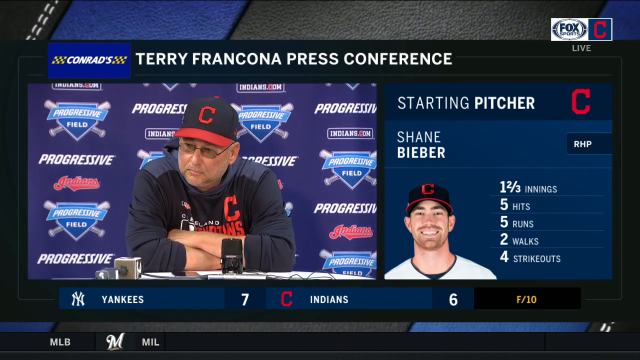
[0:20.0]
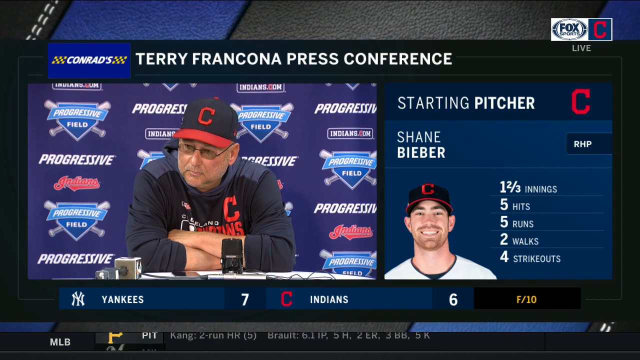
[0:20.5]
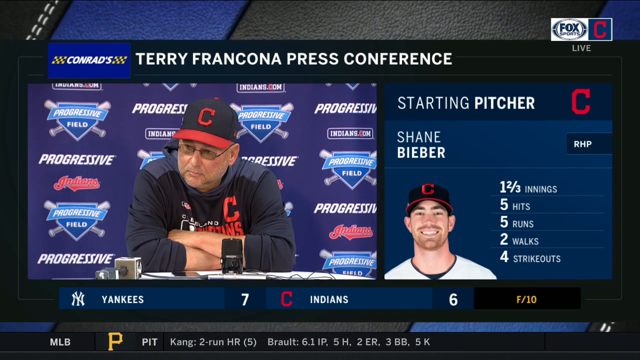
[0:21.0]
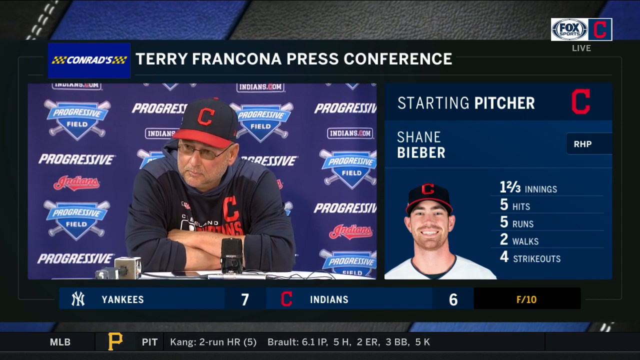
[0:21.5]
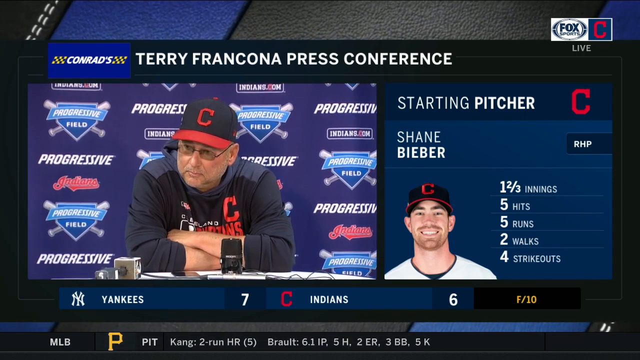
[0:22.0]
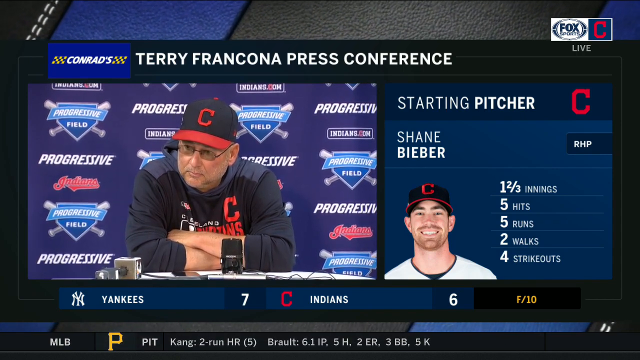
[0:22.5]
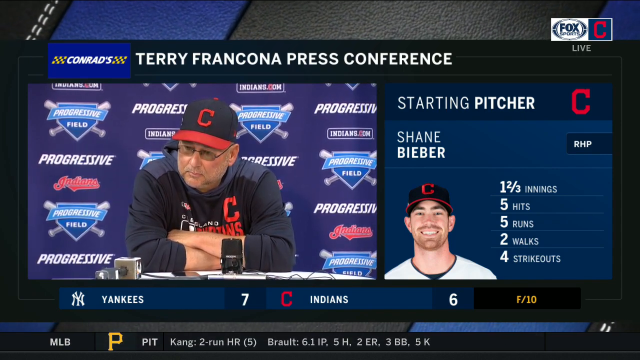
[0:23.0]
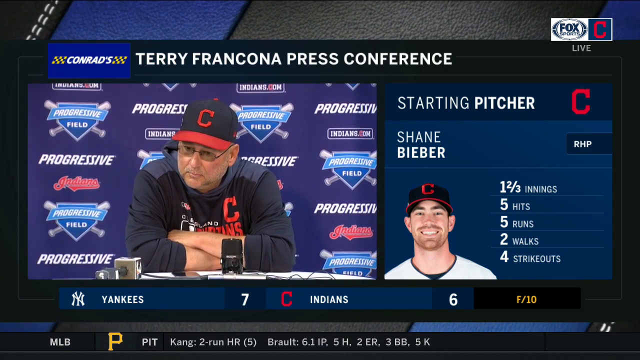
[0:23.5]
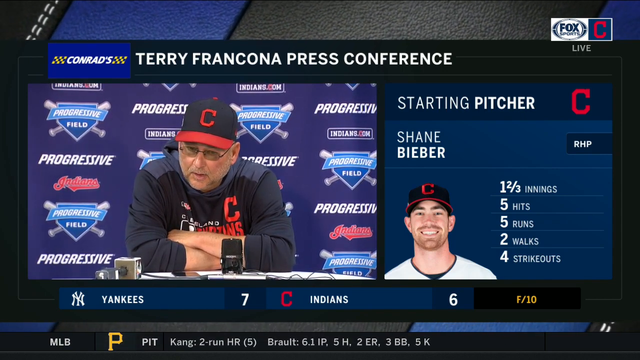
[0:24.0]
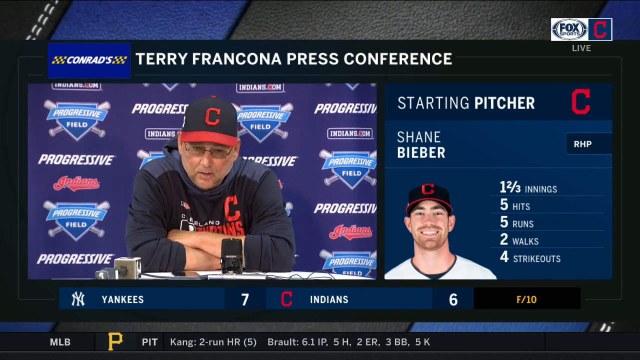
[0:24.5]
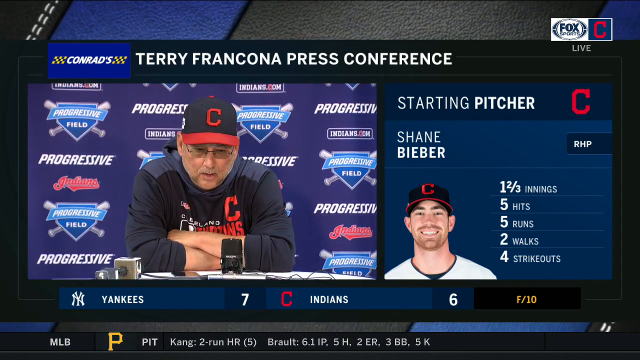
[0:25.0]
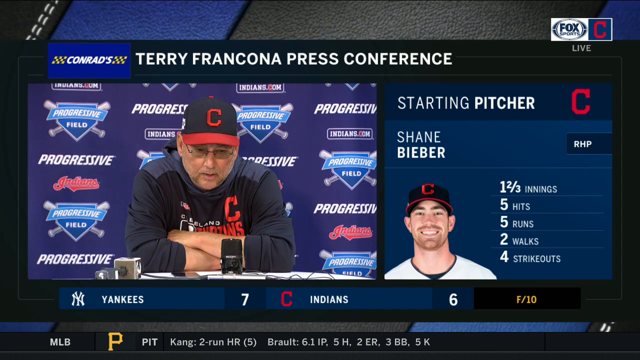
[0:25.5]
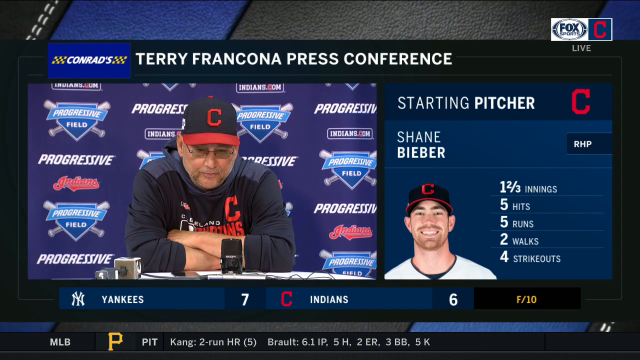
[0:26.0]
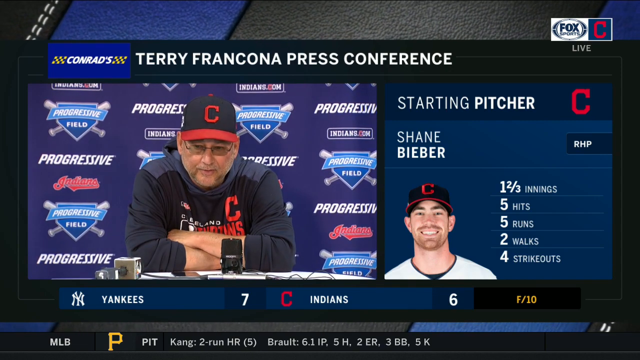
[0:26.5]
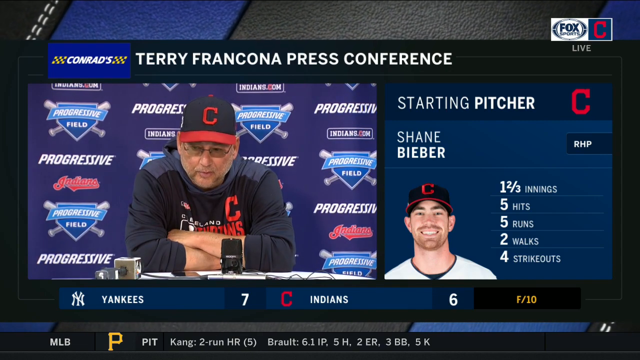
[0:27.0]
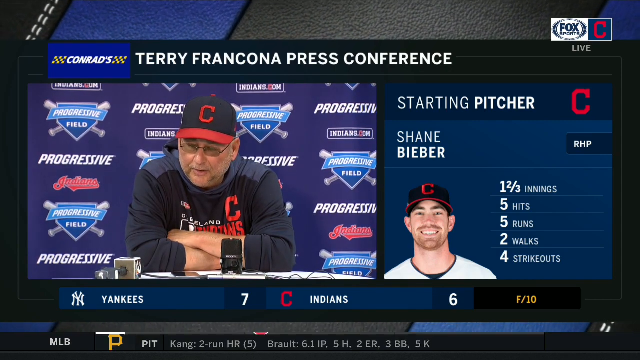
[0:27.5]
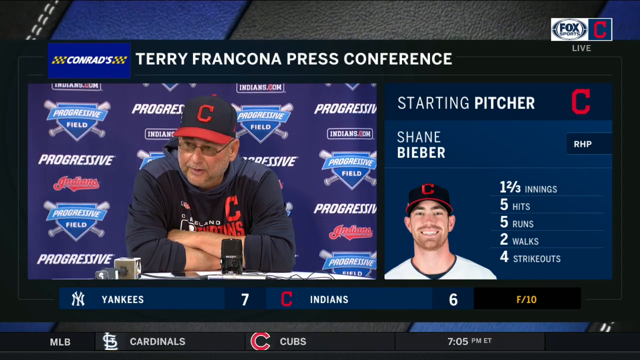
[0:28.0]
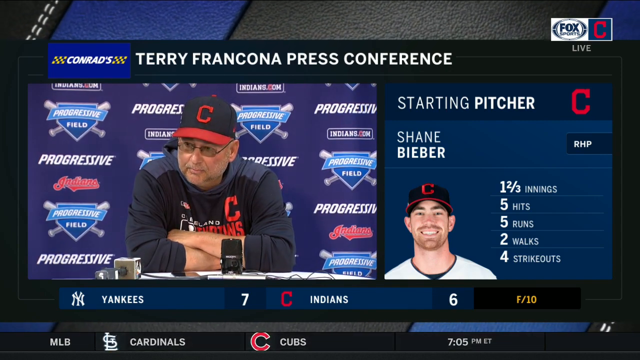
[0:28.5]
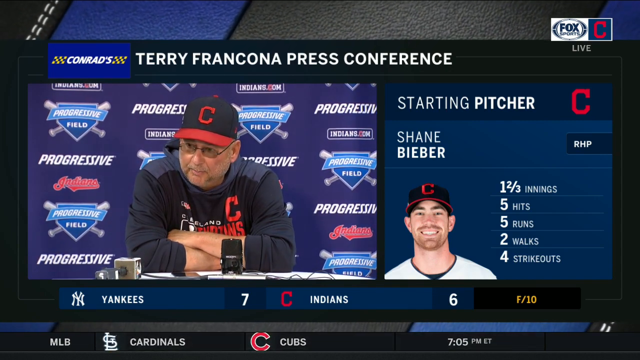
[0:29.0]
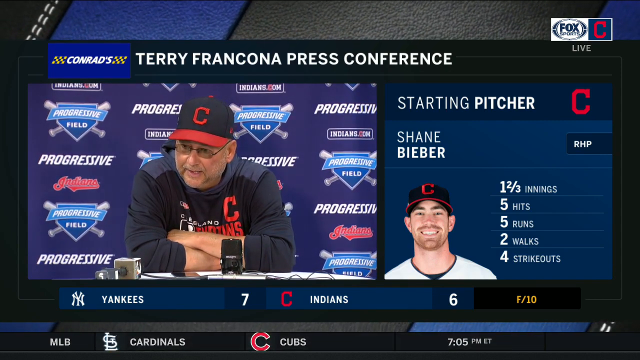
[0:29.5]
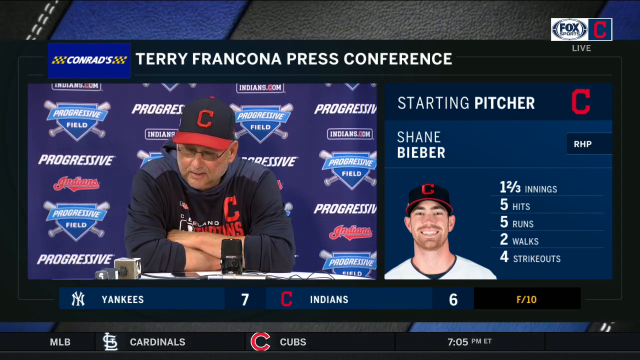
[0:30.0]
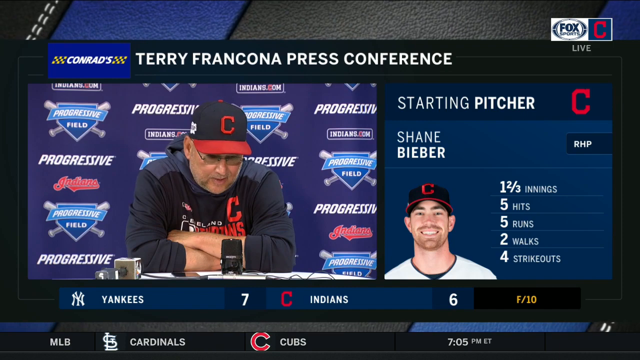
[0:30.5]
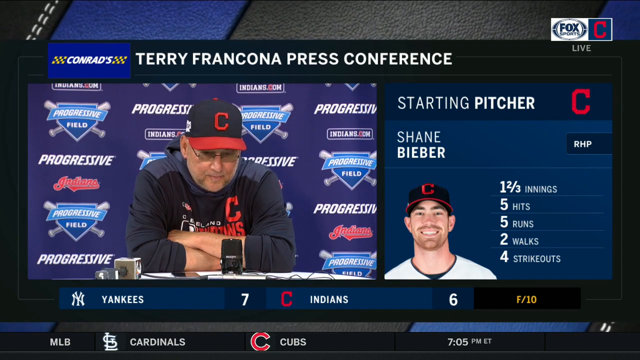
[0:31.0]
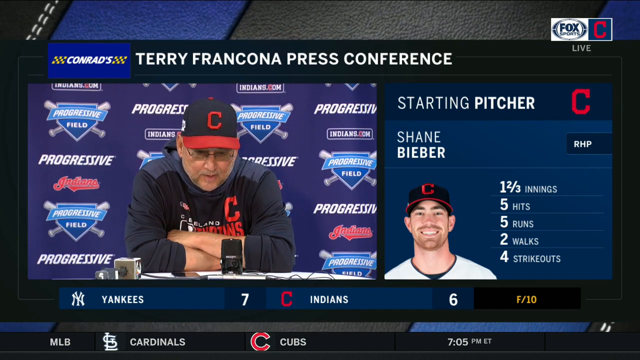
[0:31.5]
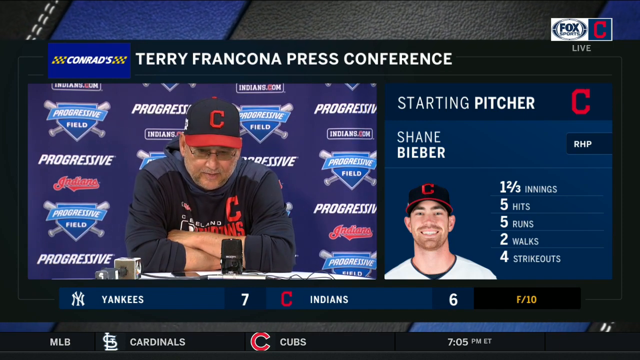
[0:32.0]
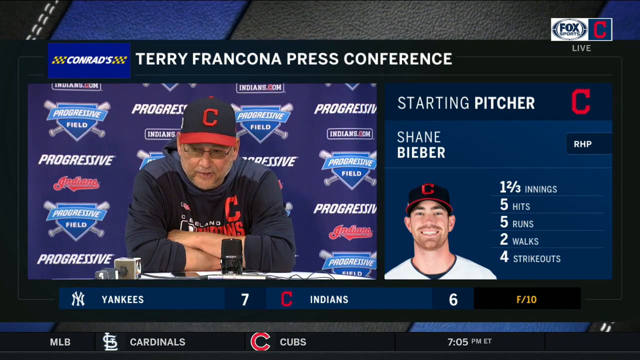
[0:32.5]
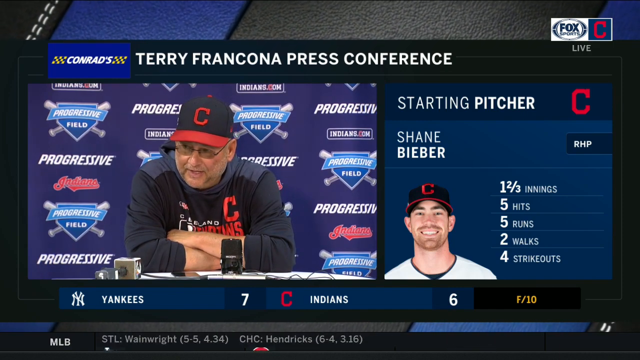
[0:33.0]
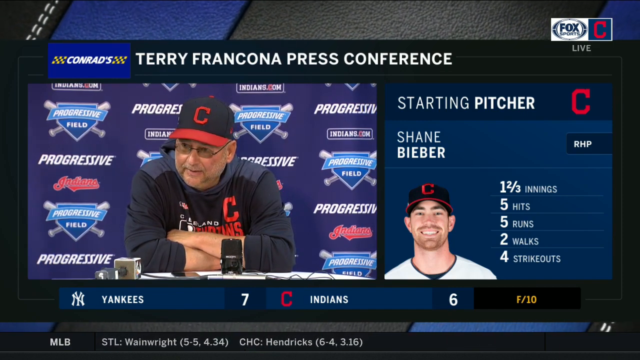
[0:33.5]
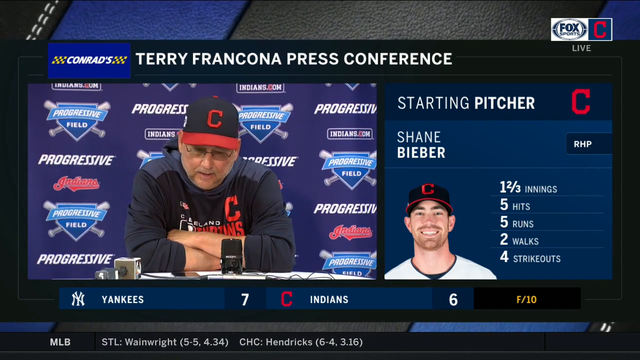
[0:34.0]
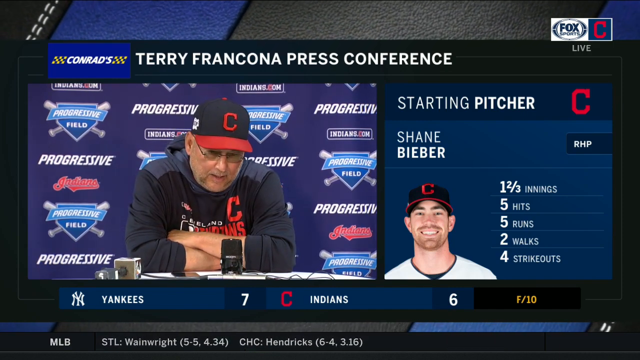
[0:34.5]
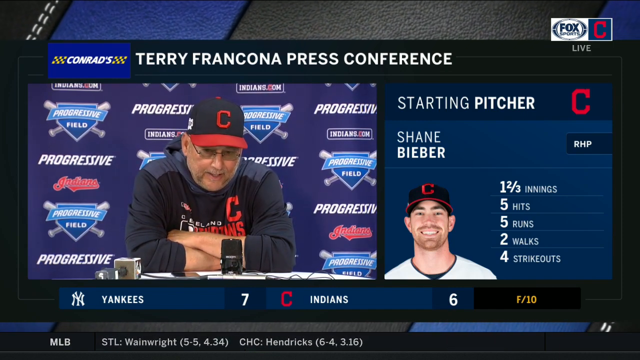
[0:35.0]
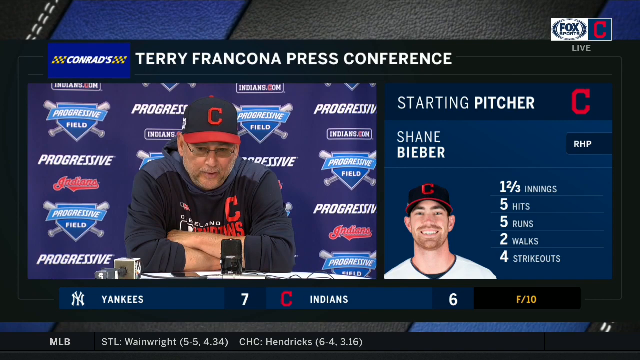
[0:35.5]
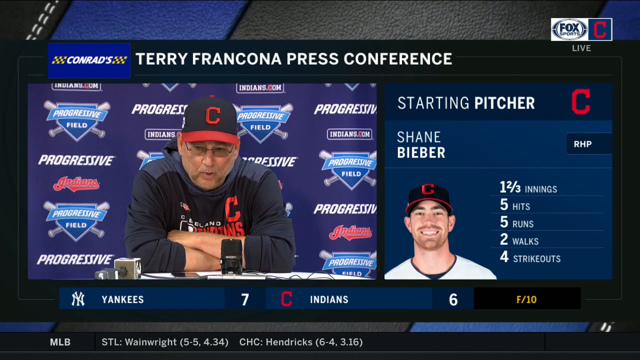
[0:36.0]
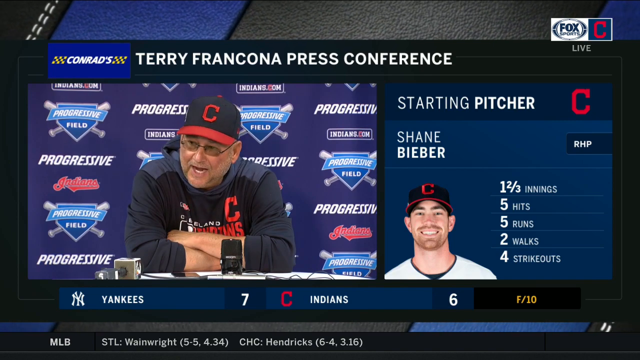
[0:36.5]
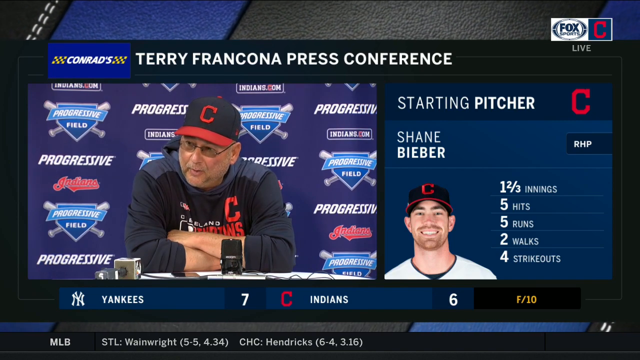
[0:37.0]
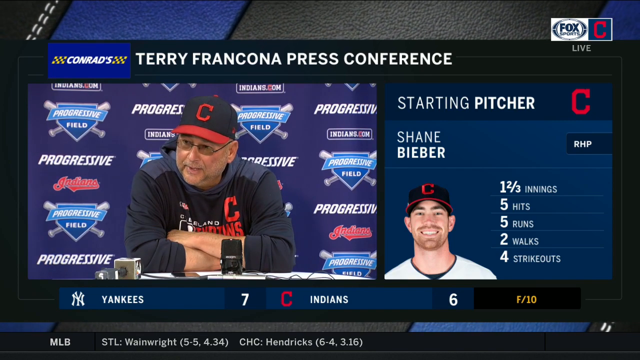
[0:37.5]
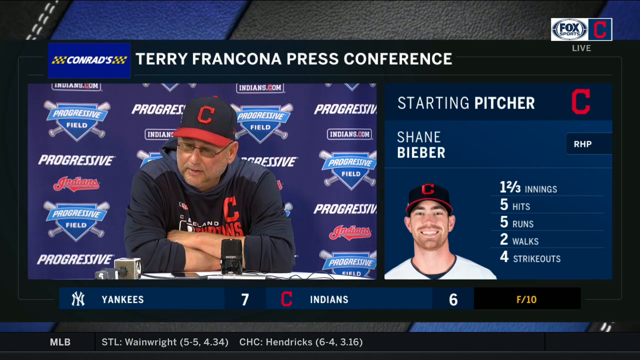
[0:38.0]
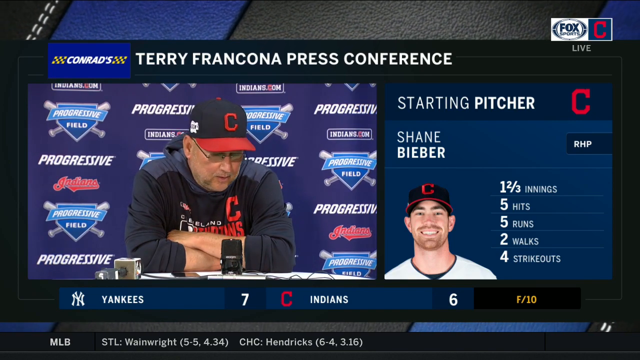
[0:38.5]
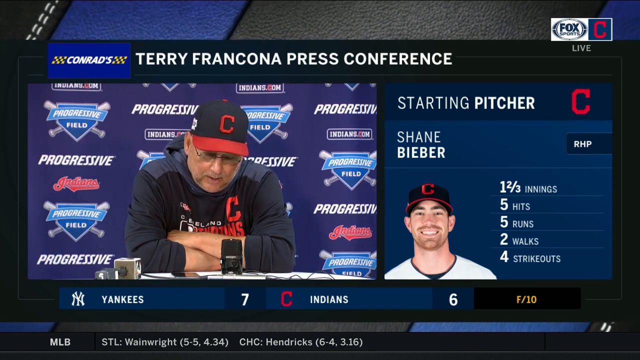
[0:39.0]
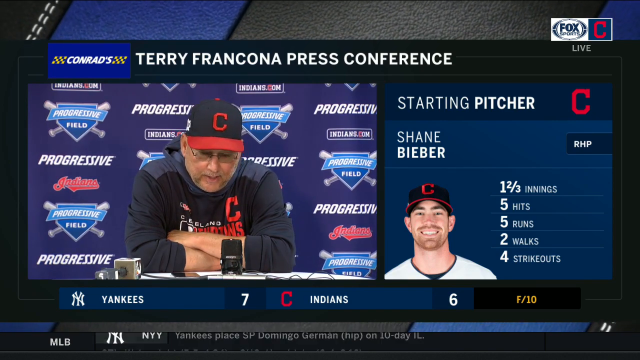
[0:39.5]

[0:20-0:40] Terry Francona wears a baseball hat that says "Cleveland Indians" and talks to the audience, with a Progressive logo and various other logos behind him. On the right side of the screen, text reads "starting pitcher" and "Shane Bieber", with statistics for innings, hits, runs and strikeouts. At the bottom of the screen, the score shows the Yankees with 7 versus the Cleveland Indians with 6. In the top right of the screen, text reads "Fox Sports Cleveland Indians".